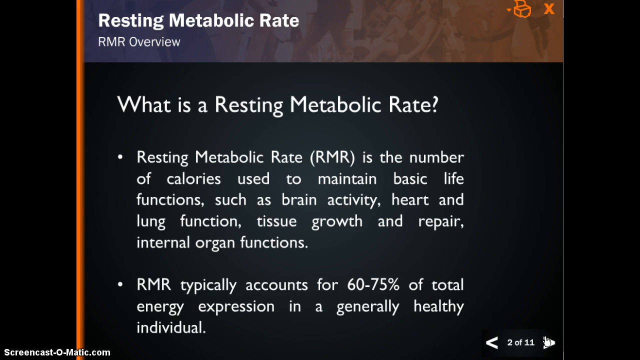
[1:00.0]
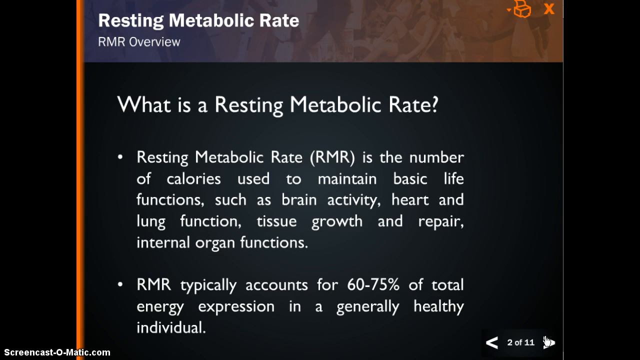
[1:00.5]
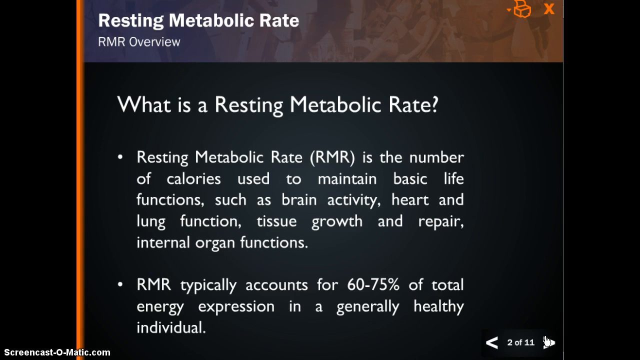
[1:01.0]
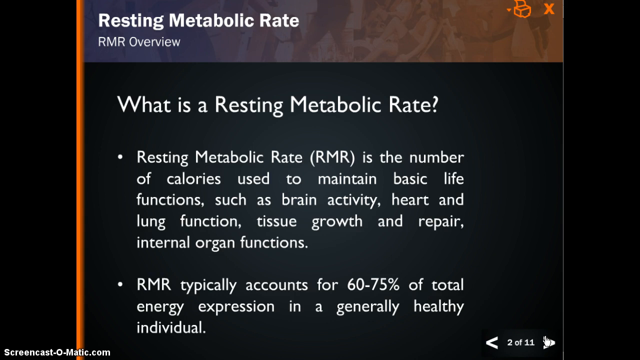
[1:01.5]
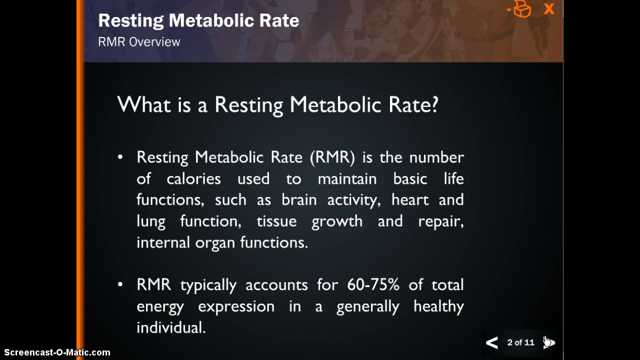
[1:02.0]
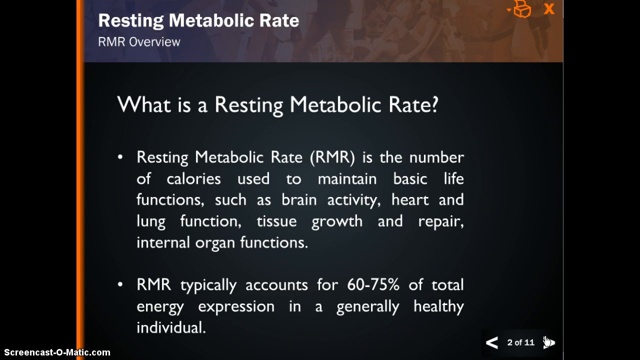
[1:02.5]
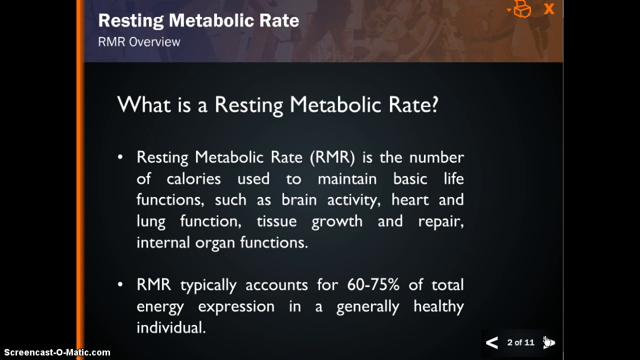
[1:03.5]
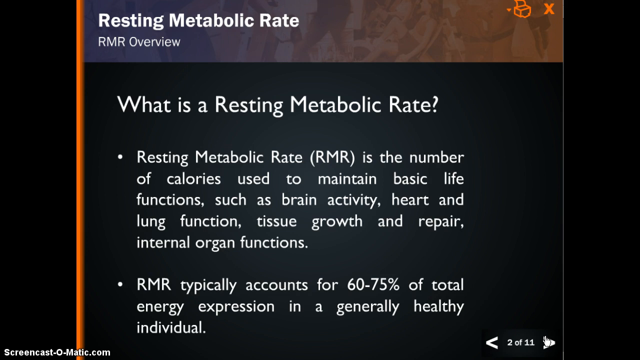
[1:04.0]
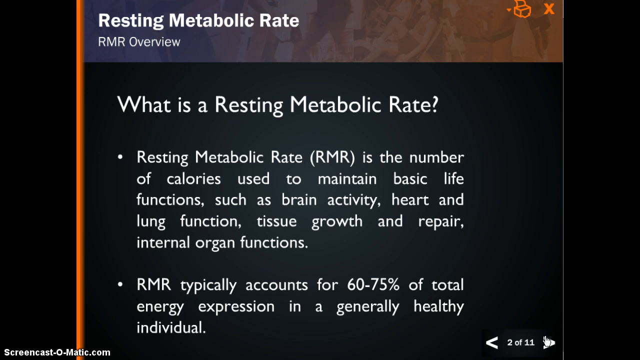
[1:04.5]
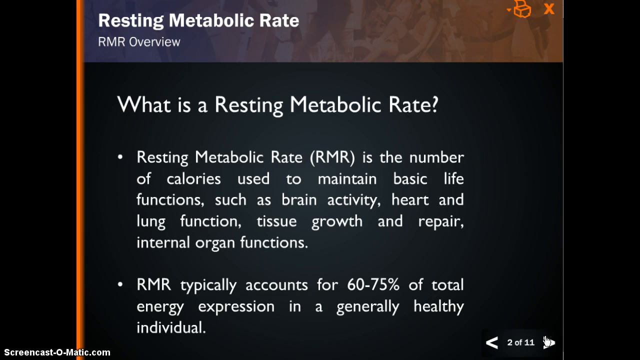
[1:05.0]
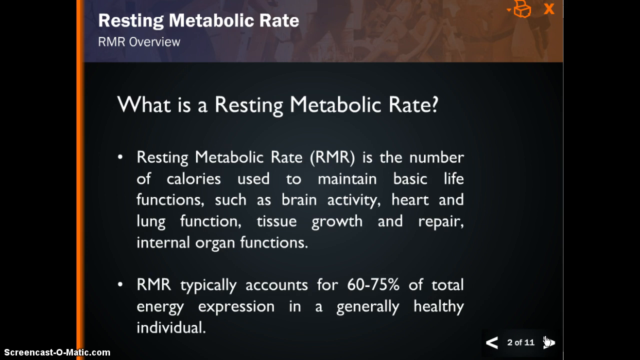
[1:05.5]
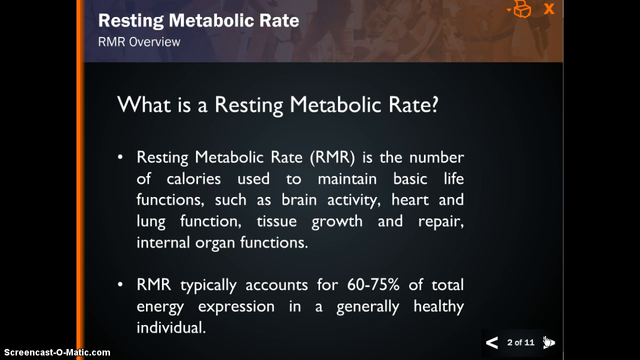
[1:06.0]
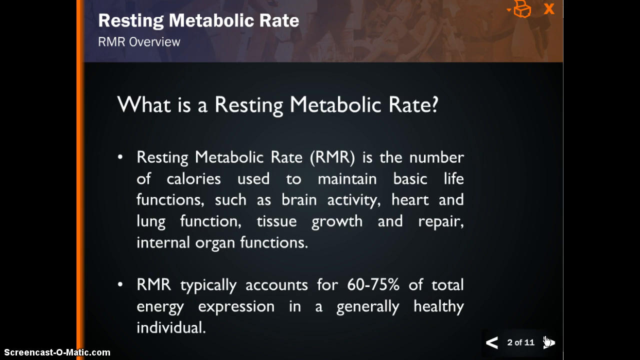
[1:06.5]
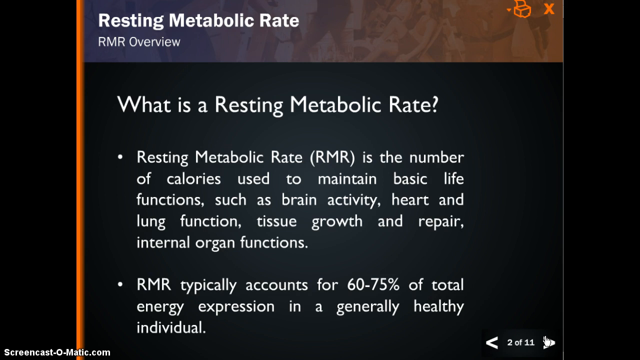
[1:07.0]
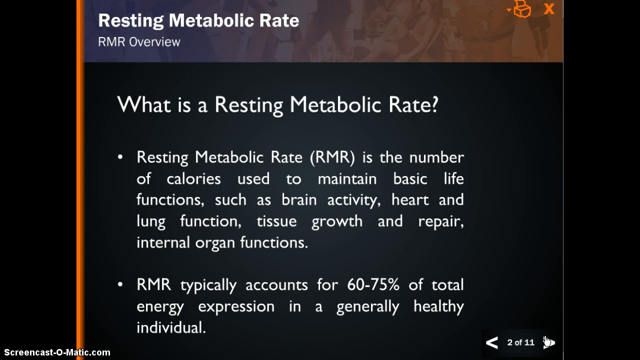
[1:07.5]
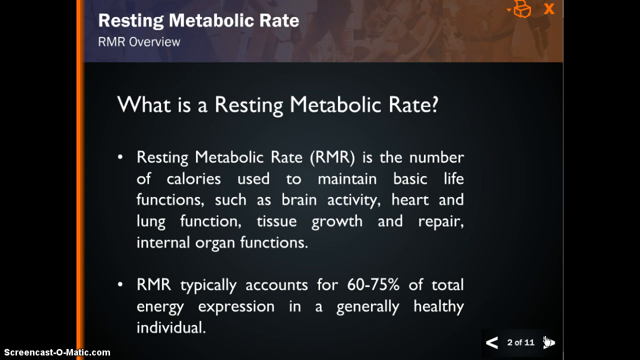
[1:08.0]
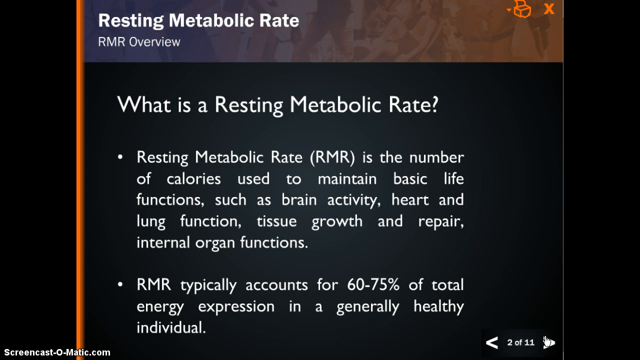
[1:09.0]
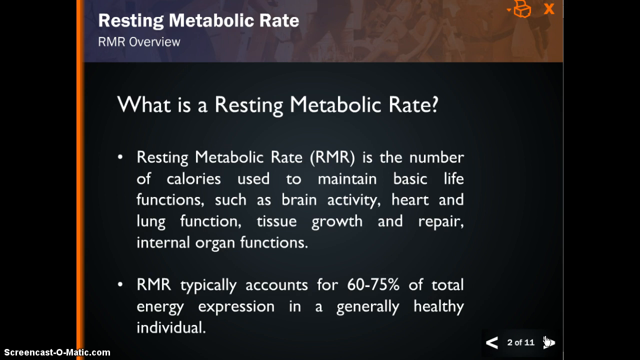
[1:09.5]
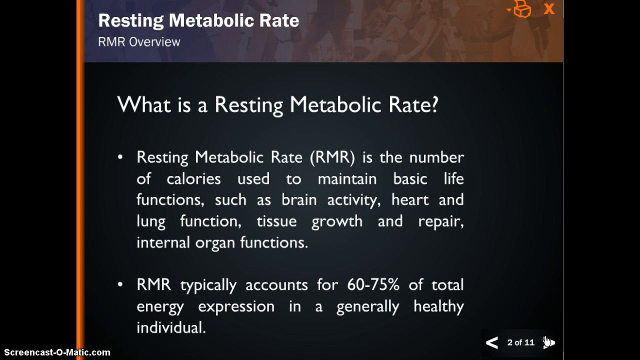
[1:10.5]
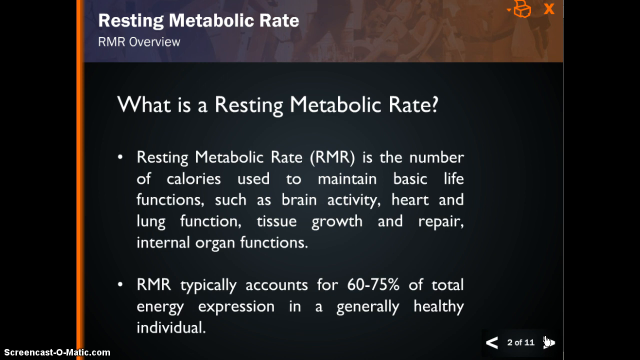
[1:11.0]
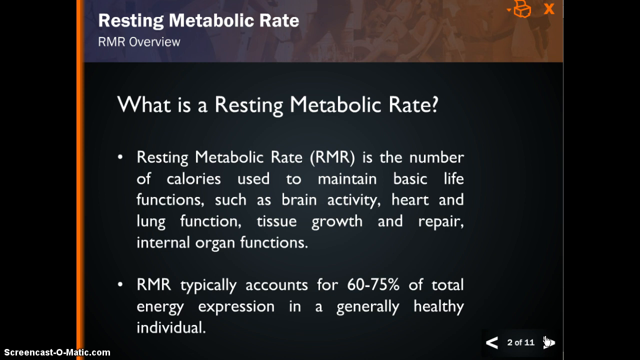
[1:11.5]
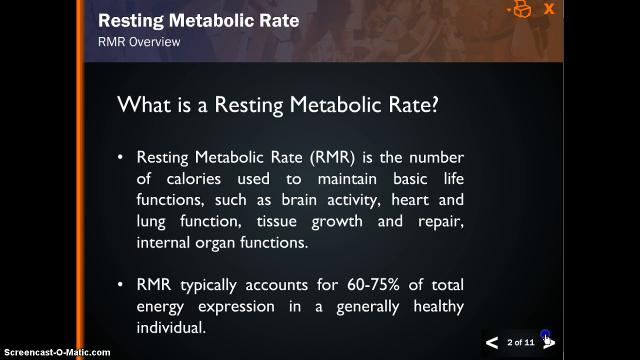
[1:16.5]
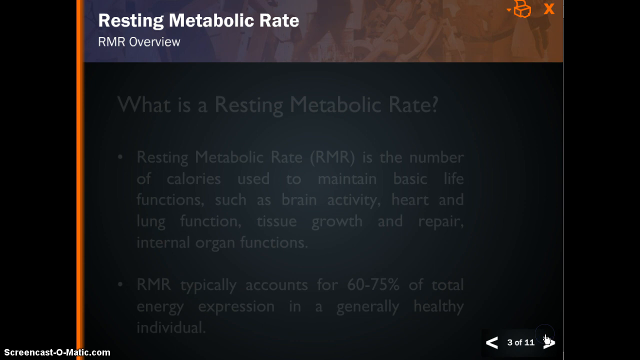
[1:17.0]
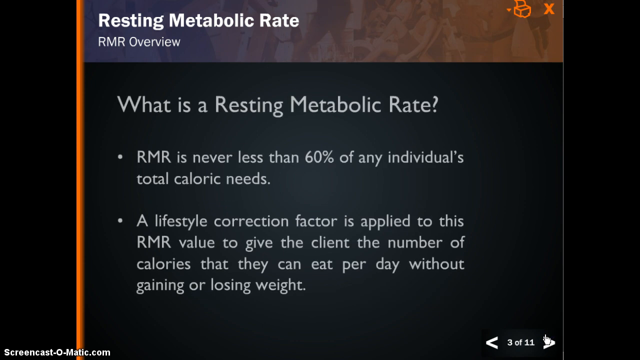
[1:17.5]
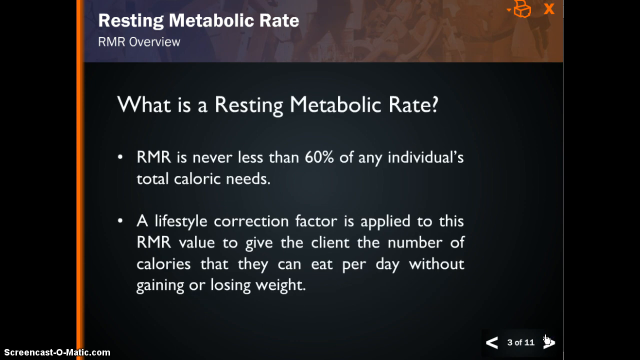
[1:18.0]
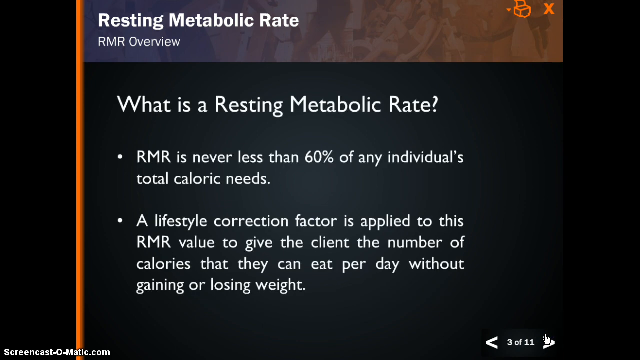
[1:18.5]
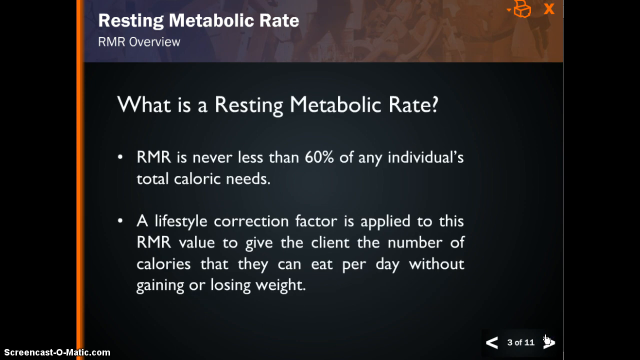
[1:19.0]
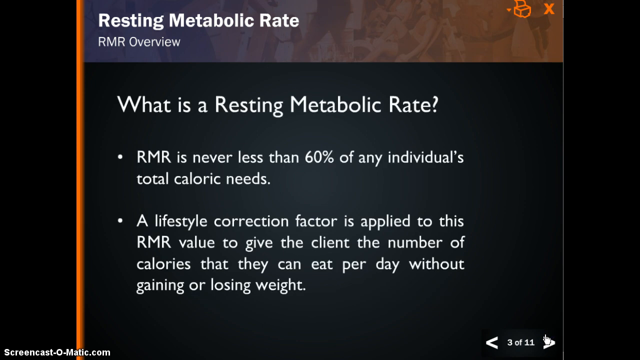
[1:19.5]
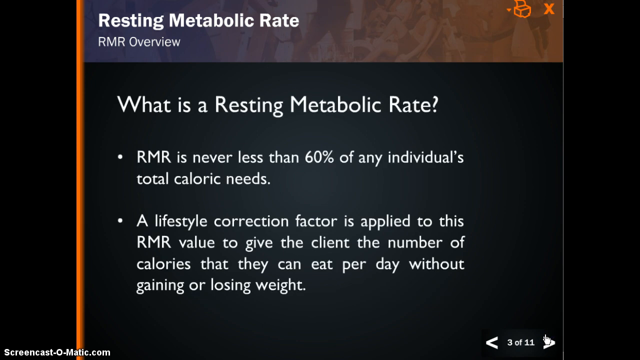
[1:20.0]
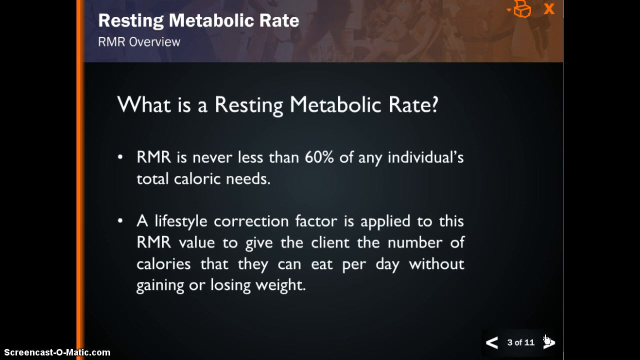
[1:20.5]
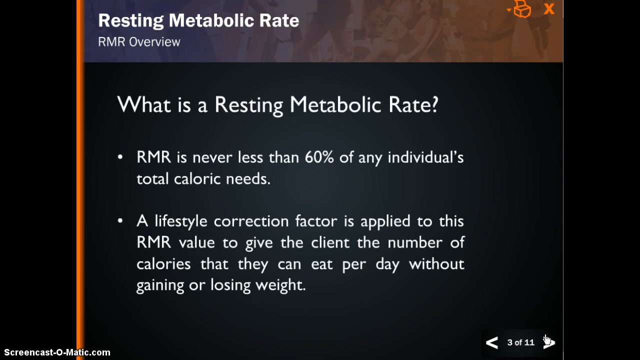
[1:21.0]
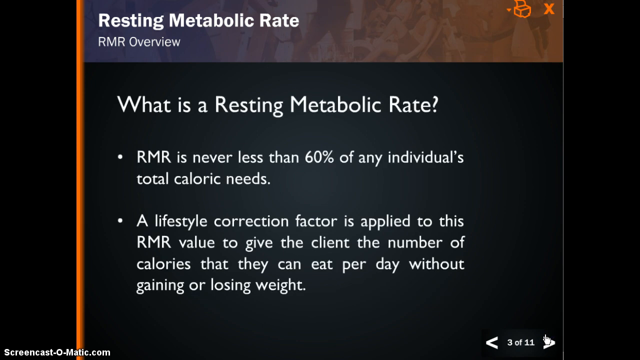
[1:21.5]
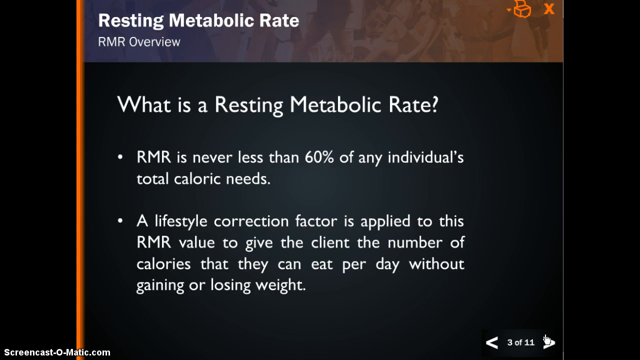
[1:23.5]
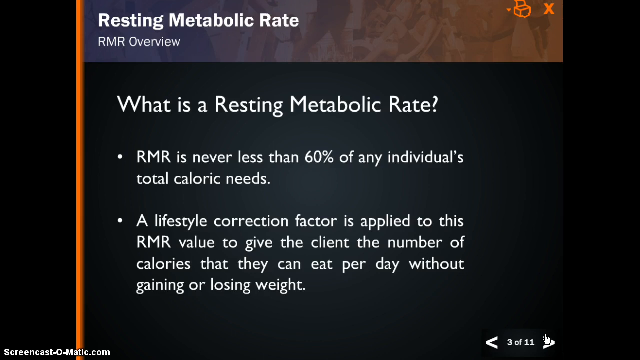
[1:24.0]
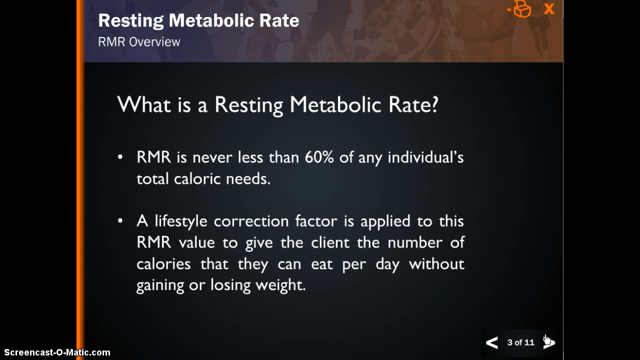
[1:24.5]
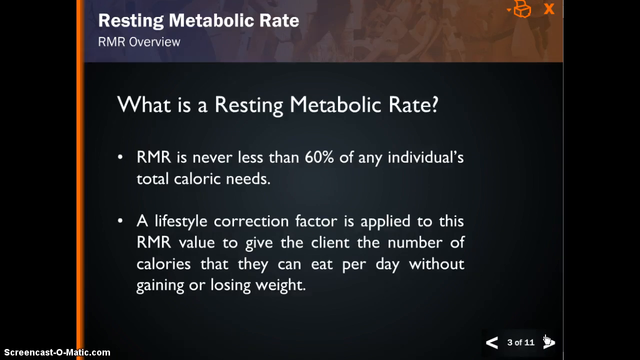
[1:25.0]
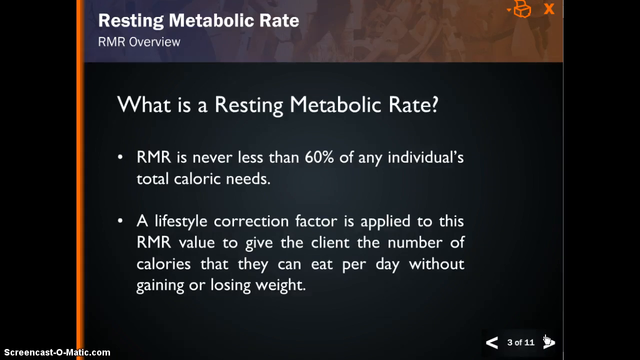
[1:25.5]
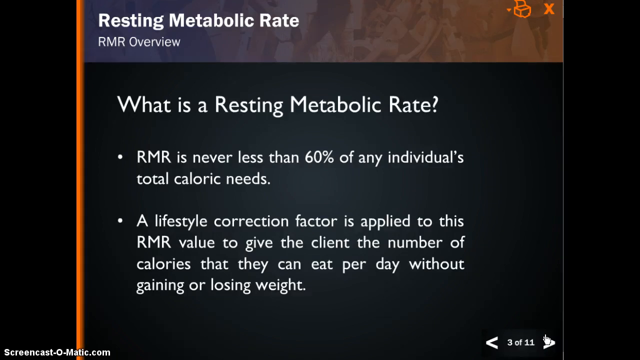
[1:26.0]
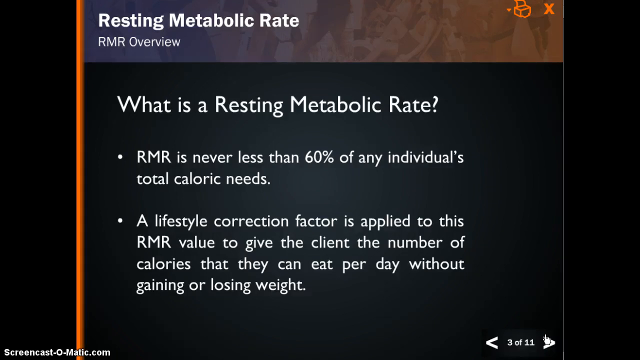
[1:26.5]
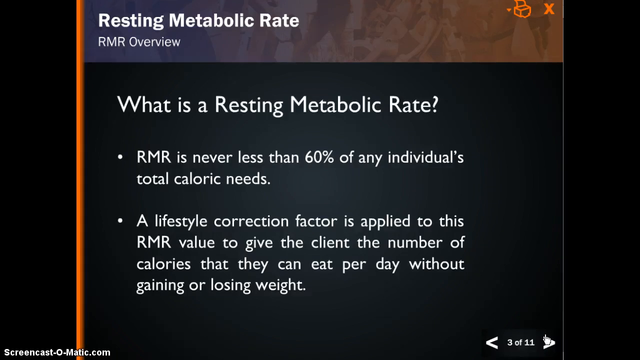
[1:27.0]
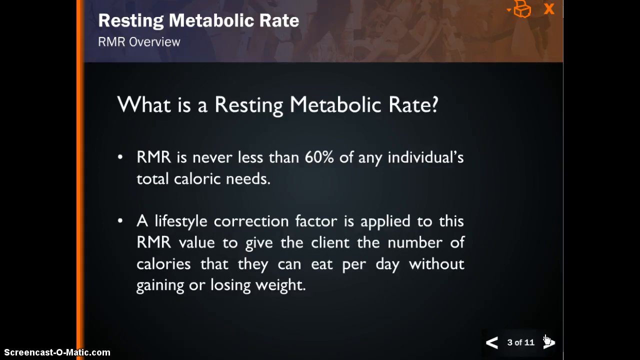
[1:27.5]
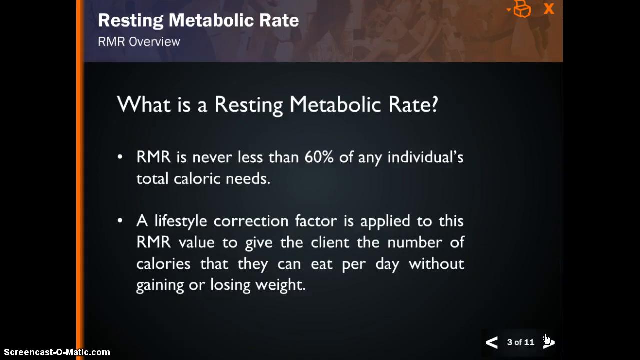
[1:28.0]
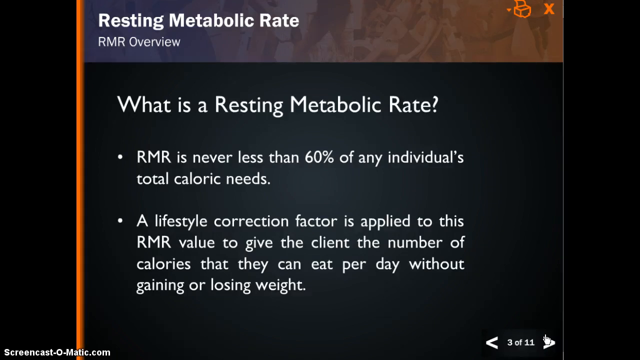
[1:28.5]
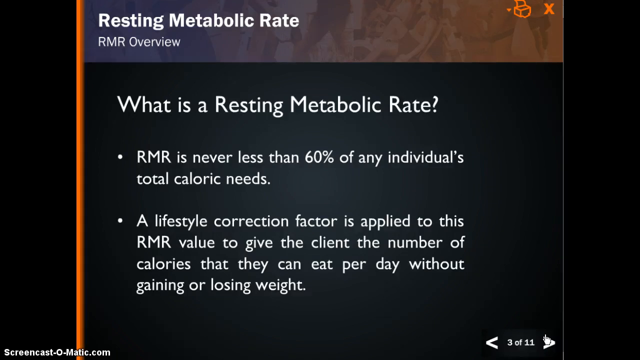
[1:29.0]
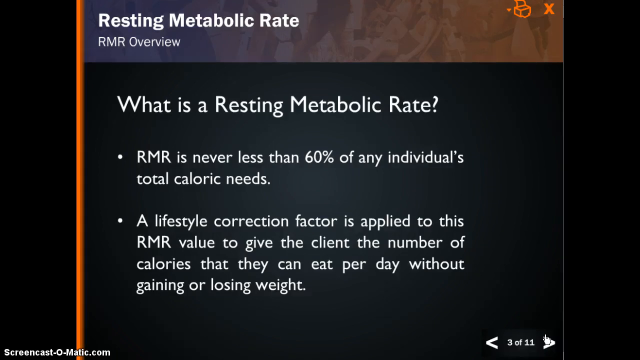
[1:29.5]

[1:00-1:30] The screen holds for a while before the two bullet points change. The first now states that "RMR is never less than 60% of any individual's total caloric needs." The bottom bullet point states that a lifestyle correction factor is applied to this RMR value to give the client the number of calories they can eat per day without gaining or losing weight. The "Resting Metabolic Rate RMR overview" title is still on top of the edited banner at the top of the slide, with "RMR" in smaller text than "Resting Metabolic Rate". The text is still white on the black slide with its lighter gray center fading out into the black, and the "What is a Resting Metabolic Rate" title remains at the top of the slide.